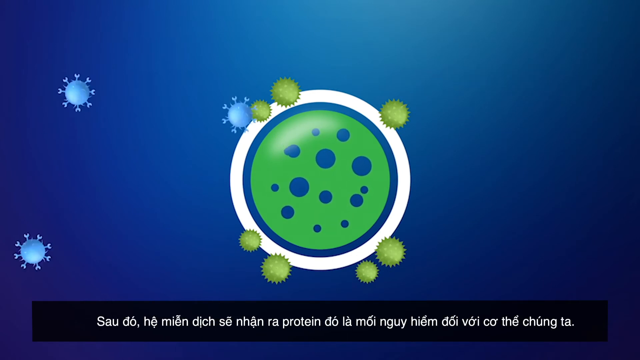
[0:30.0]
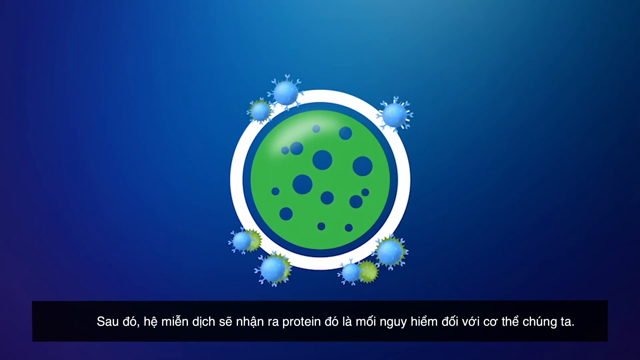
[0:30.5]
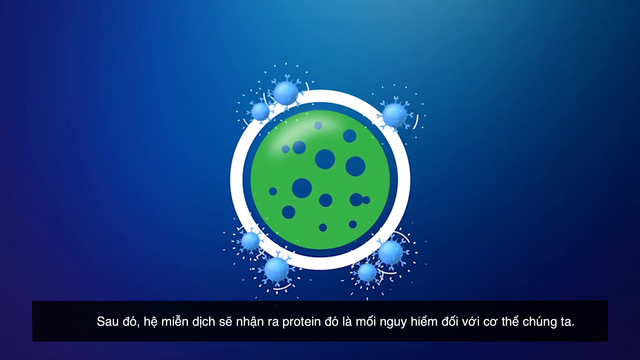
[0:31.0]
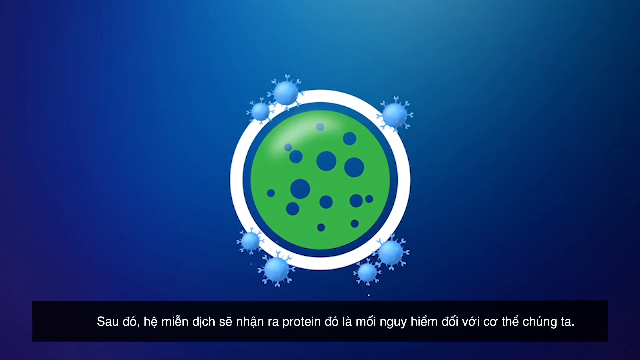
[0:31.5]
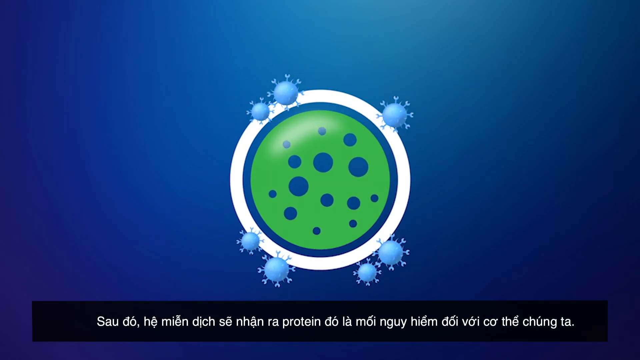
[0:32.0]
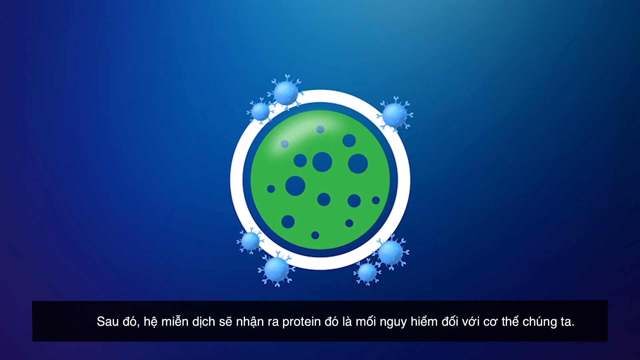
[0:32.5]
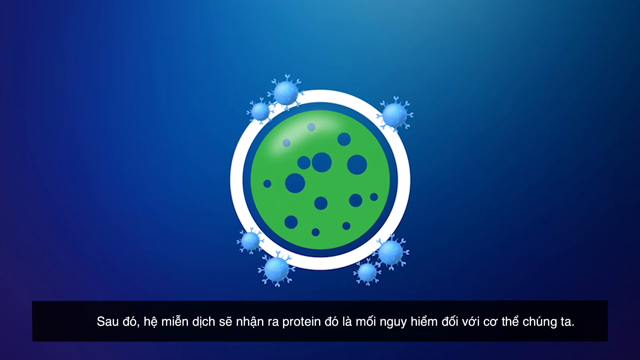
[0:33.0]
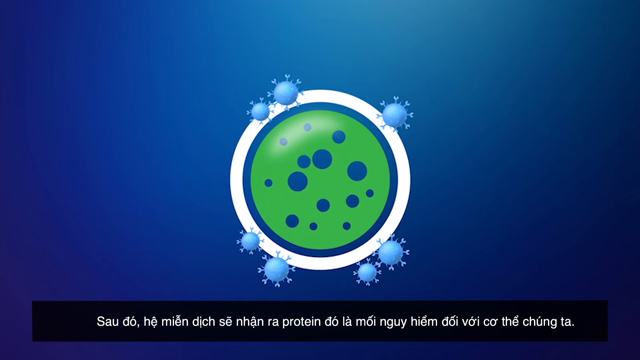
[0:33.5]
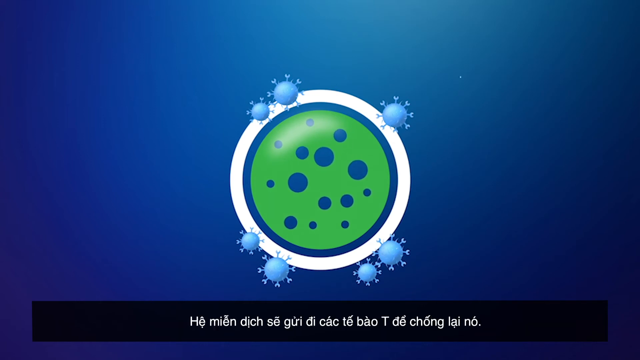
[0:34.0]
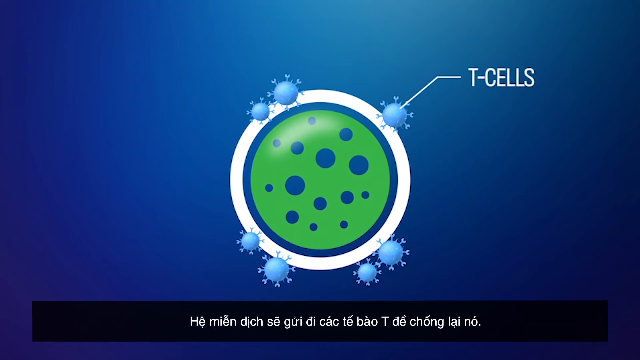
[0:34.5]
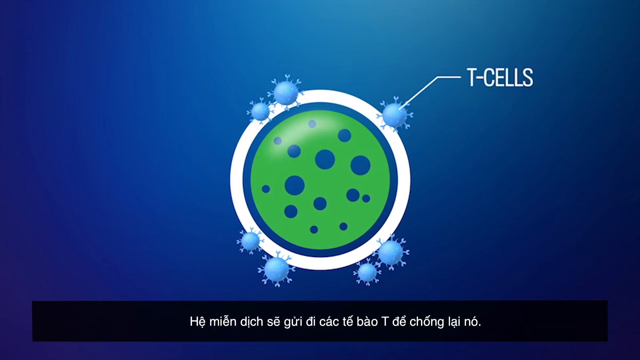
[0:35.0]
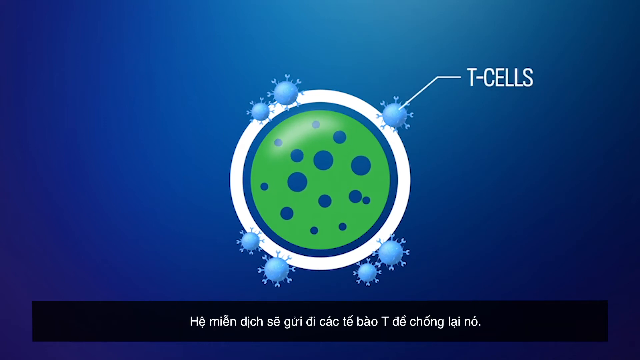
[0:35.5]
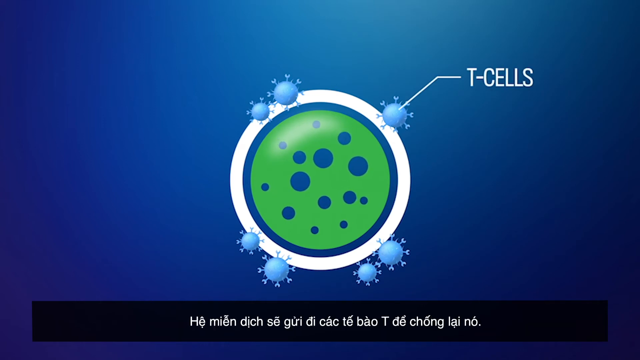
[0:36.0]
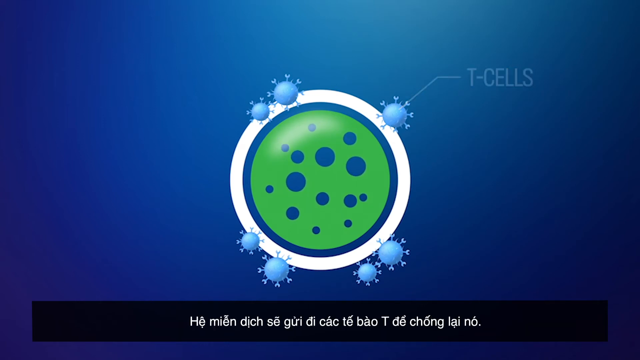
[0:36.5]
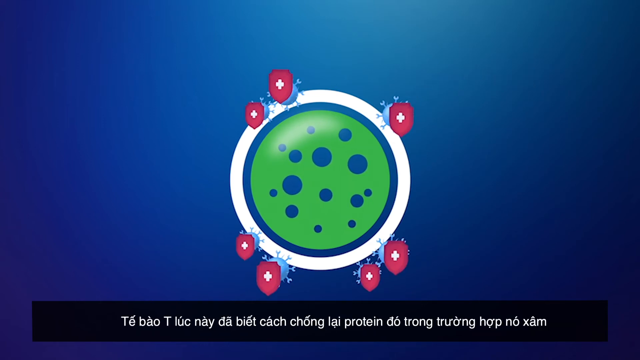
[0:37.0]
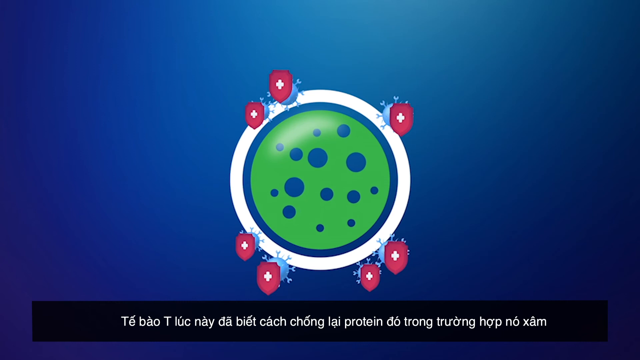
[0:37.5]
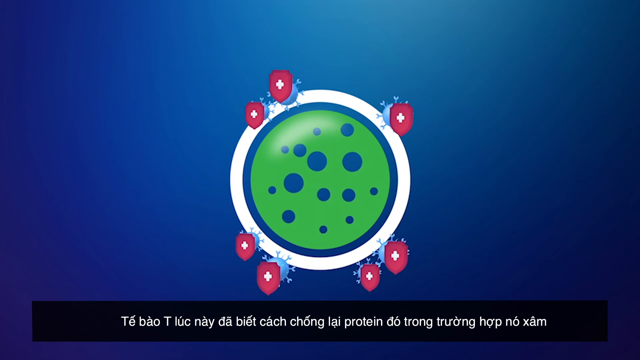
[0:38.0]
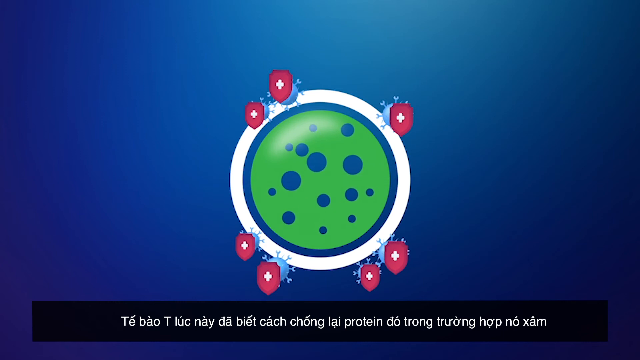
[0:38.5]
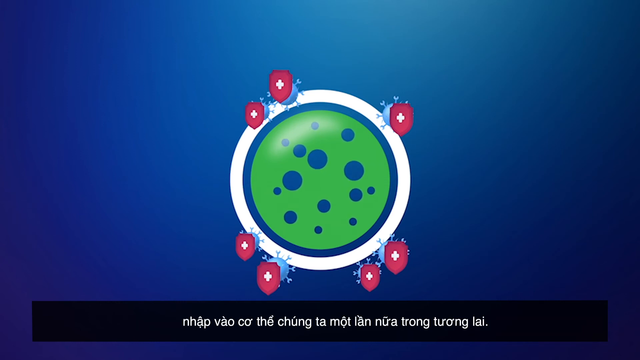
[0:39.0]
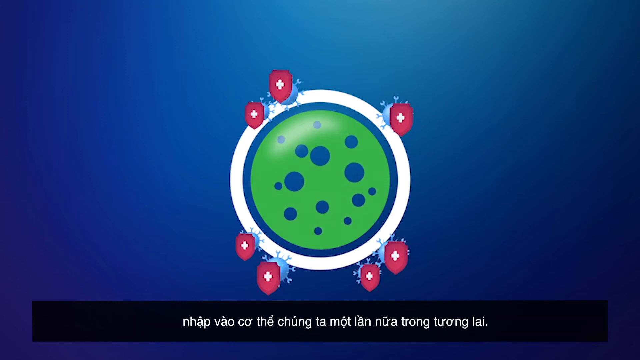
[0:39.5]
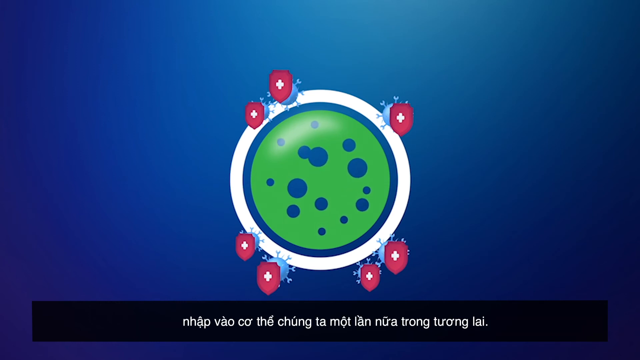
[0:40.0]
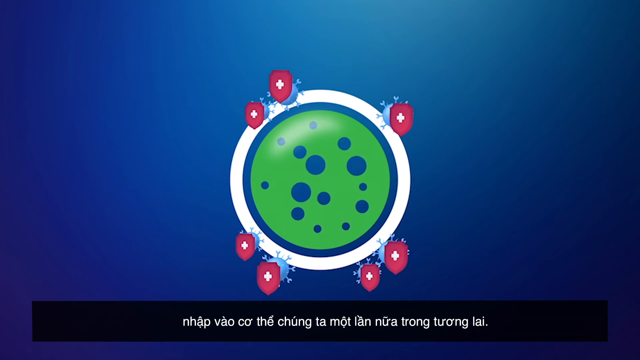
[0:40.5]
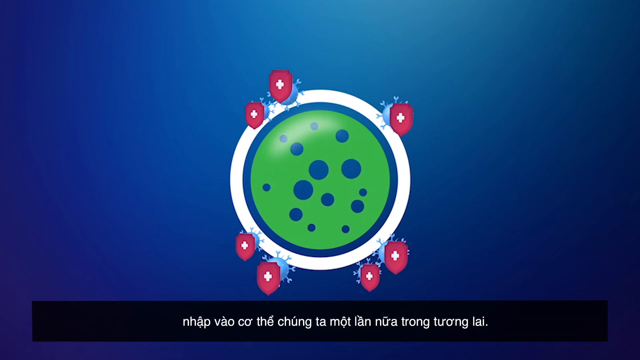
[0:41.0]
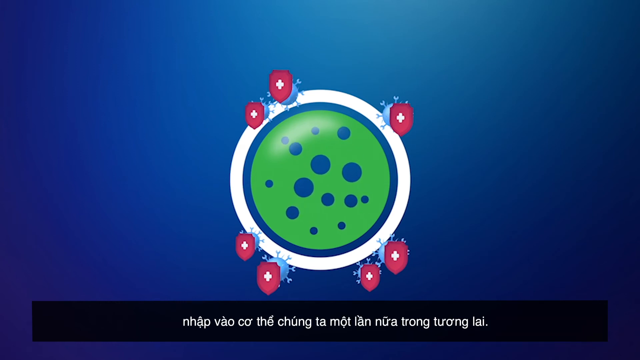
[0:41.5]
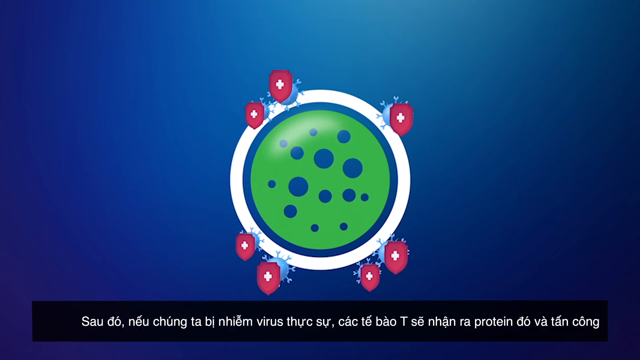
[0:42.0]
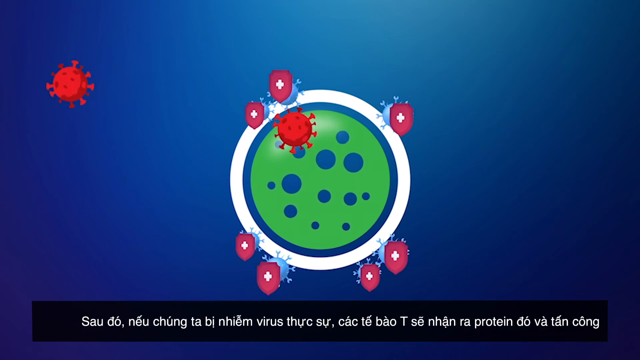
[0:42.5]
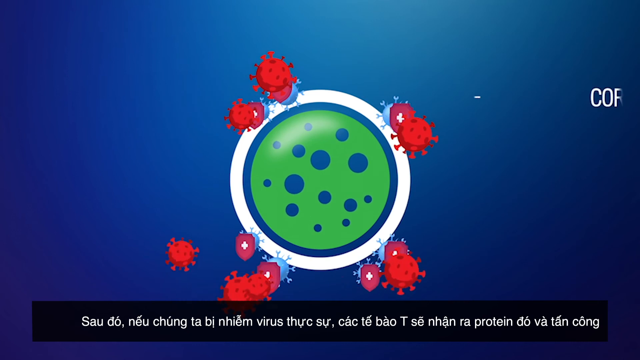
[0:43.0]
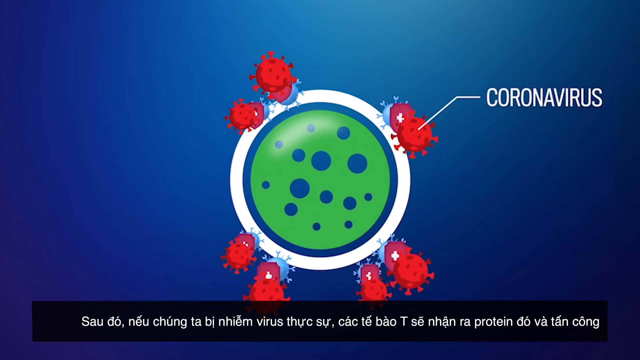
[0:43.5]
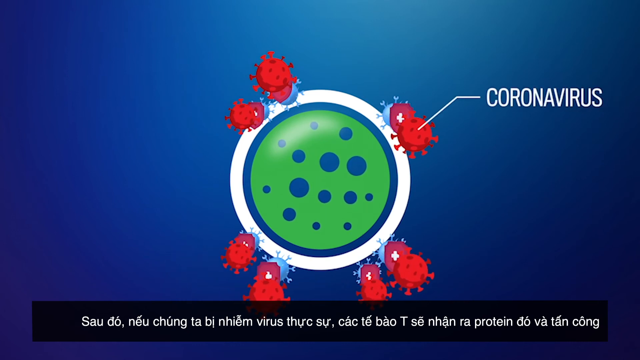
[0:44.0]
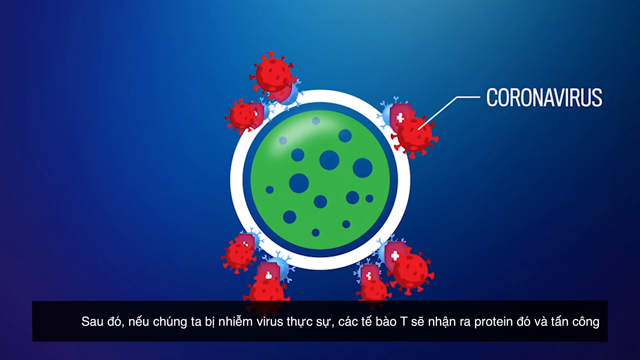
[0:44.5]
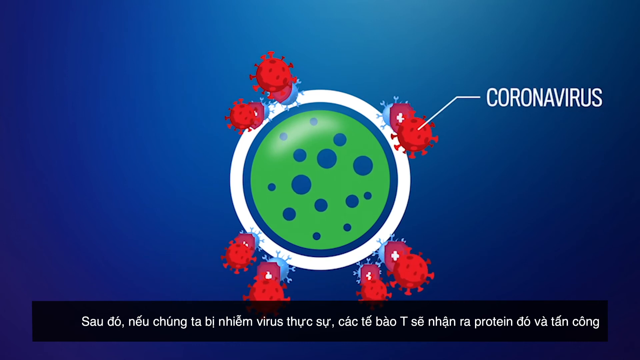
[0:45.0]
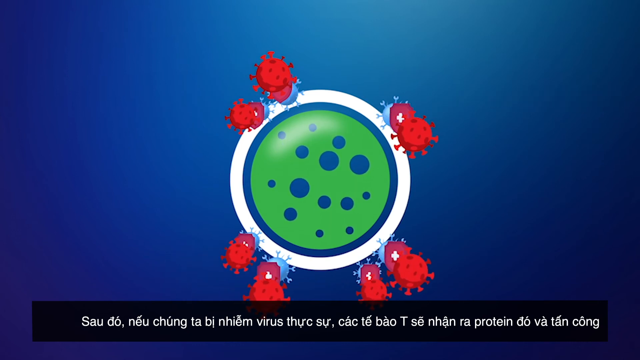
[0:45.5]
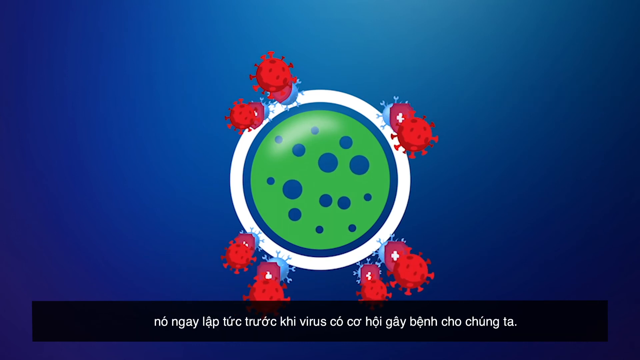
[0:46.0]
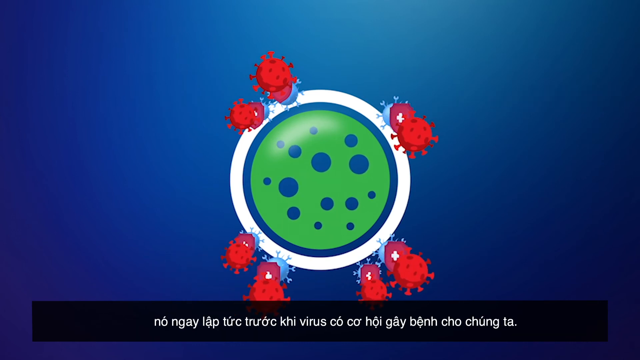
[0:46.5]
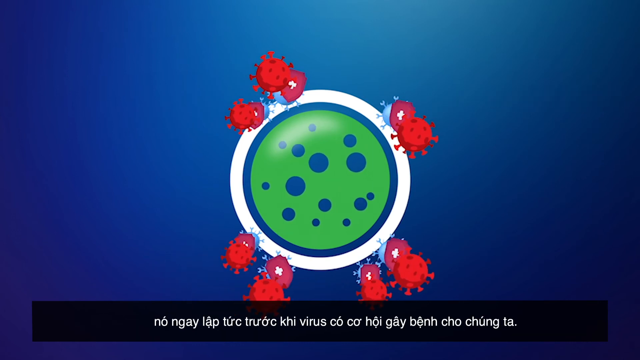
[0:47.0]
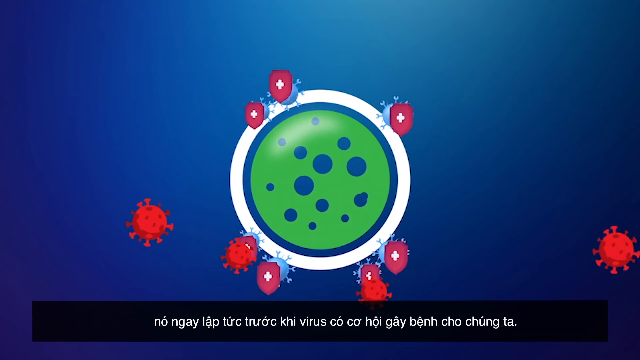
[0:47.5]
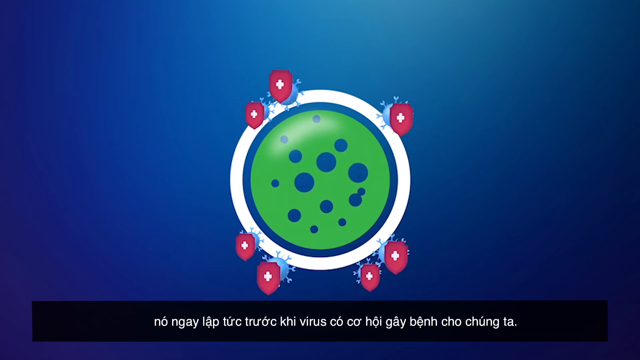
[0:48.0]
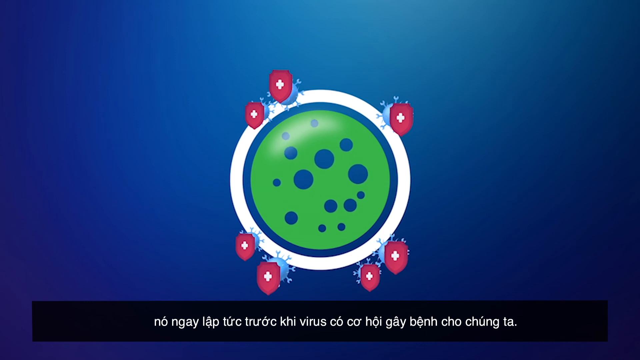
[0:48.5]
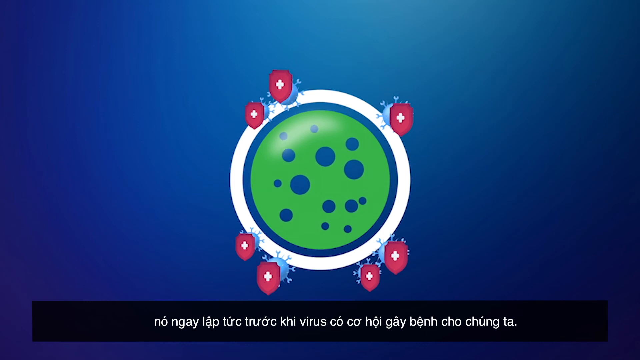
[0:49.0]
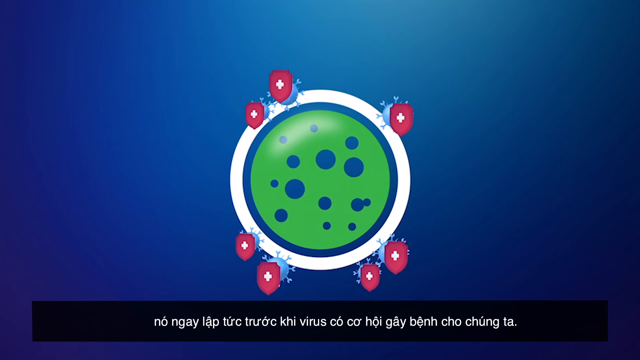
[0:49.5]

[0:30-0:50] On a blue background, a large green circle with small dark blue spots sits in the middle, and small spiky lime green circles that look like some type of bacteria stick to its outer border. Smaller blue, bacteria-looking circles fly in from the left and stick to the larger green circle, almost directly over the locations of the smaller lime green spiky circles. They then shift a little so that they completely cover the lime green spiky circles attached to the outer part of the larger circle. The dark blue spots inside the darker green circle shift around slightly, and next to the smaller light blue bacteria-looking circles a line is attached with the text "T-cells". A graphic that looks somewhat like a red shield with a white cross in the center then covers all of the small light blue bacteria-looking cells attached to the outer border of the darker green large circle.